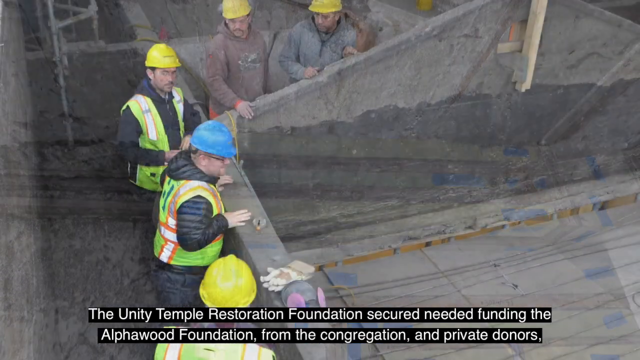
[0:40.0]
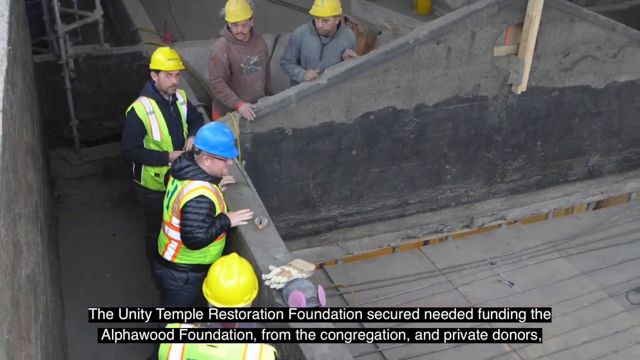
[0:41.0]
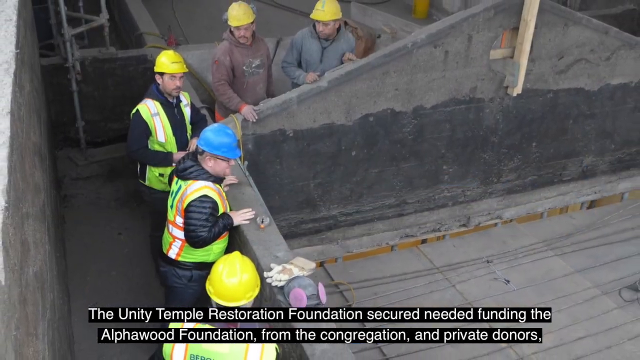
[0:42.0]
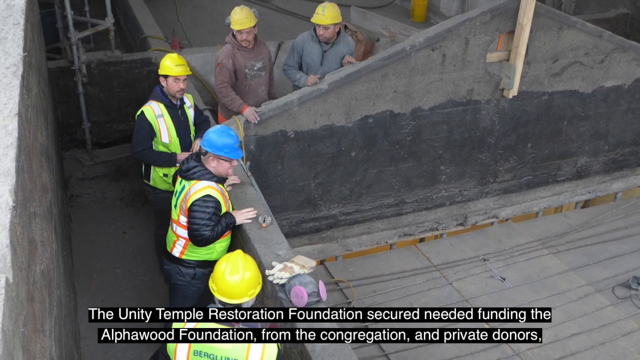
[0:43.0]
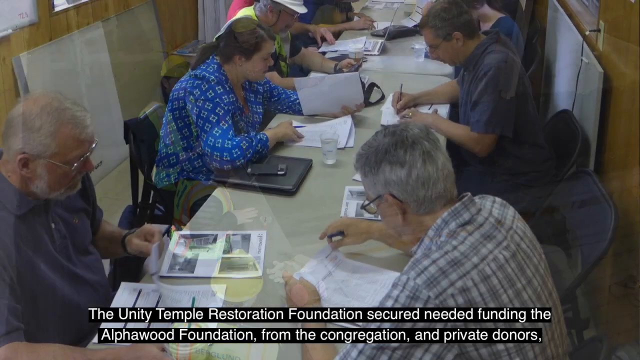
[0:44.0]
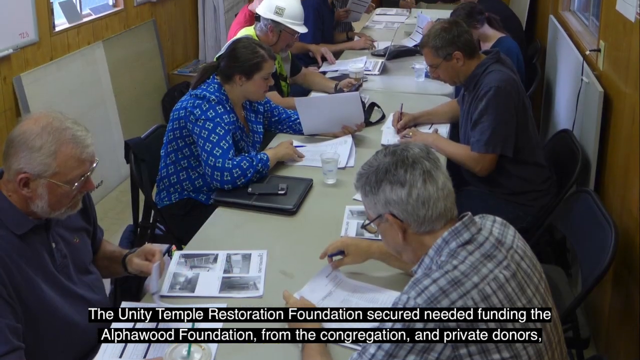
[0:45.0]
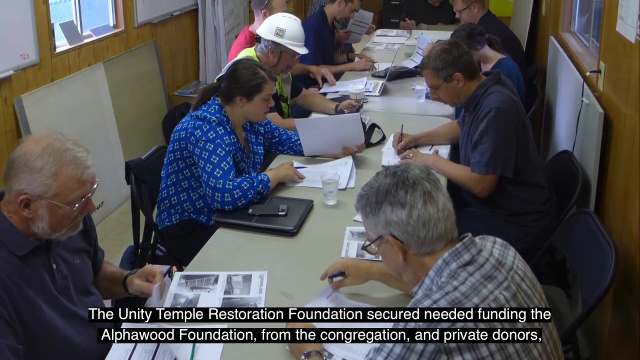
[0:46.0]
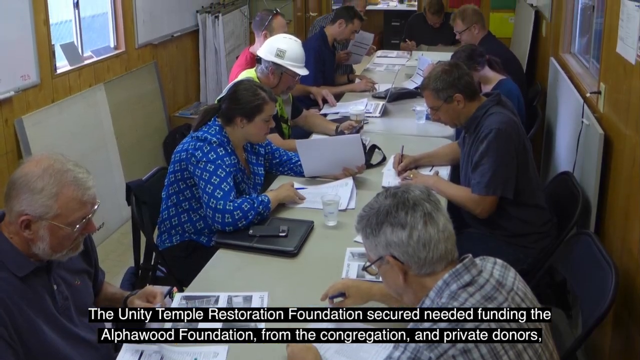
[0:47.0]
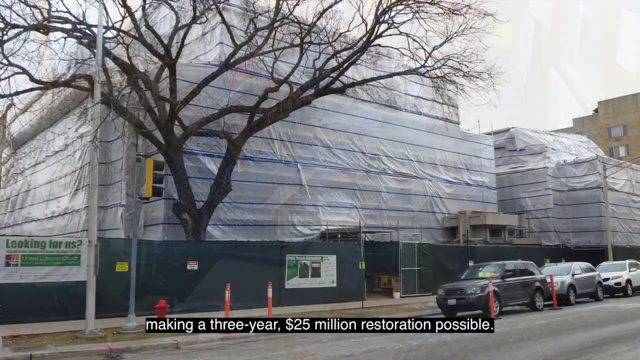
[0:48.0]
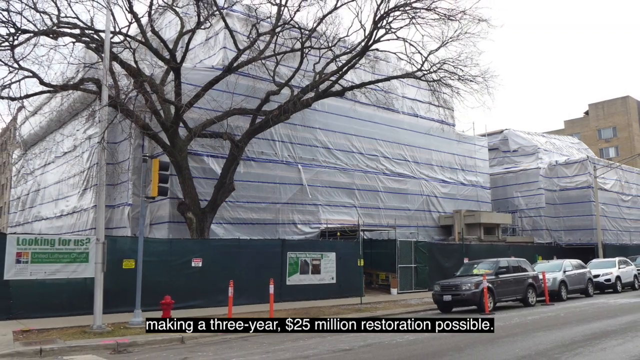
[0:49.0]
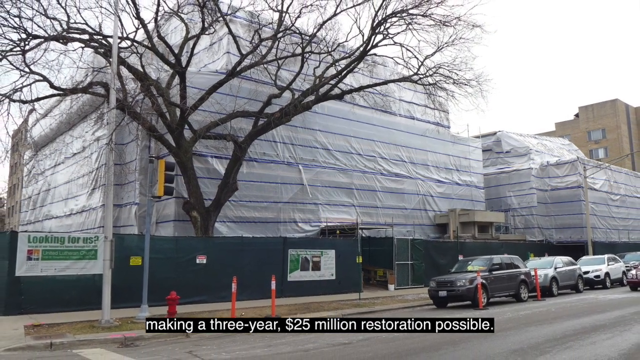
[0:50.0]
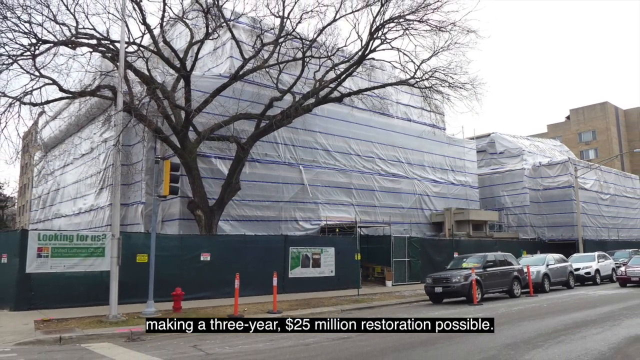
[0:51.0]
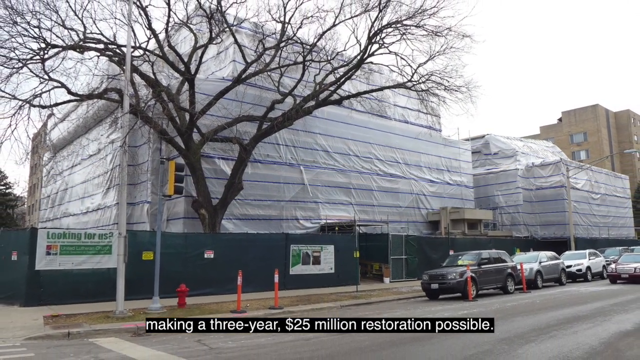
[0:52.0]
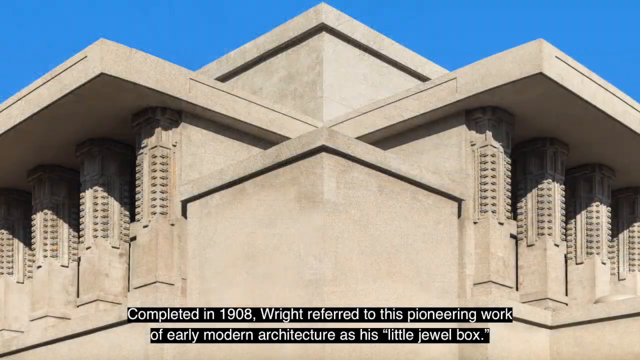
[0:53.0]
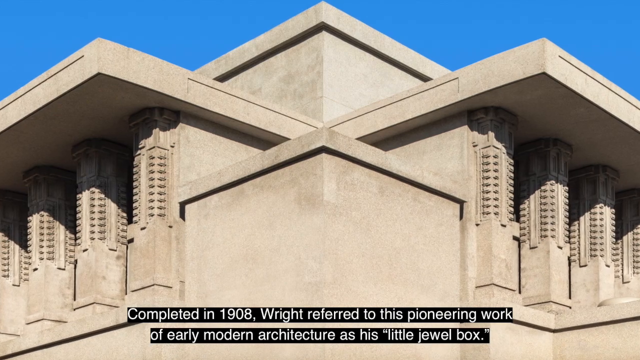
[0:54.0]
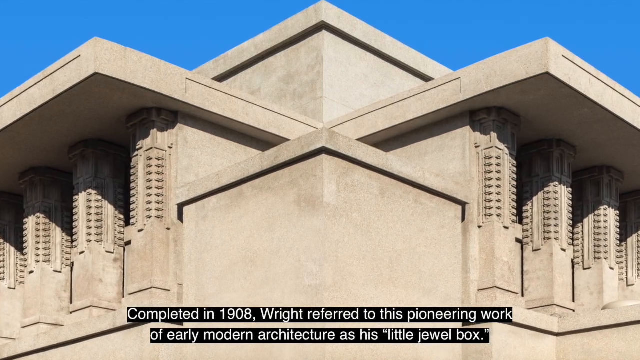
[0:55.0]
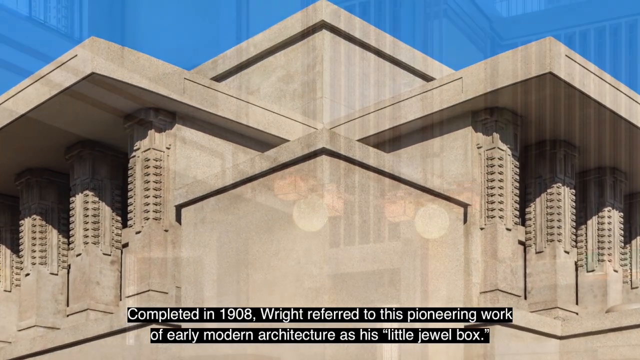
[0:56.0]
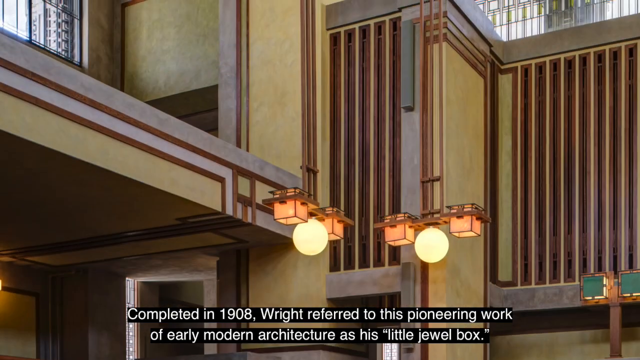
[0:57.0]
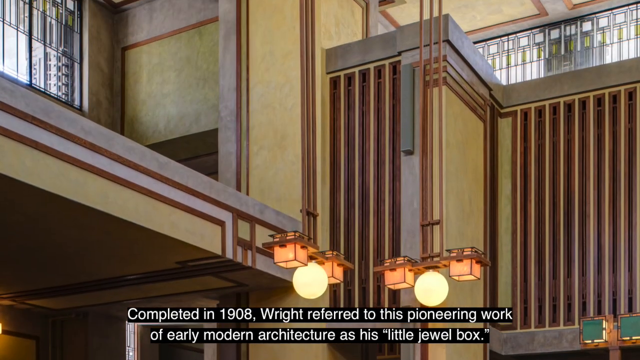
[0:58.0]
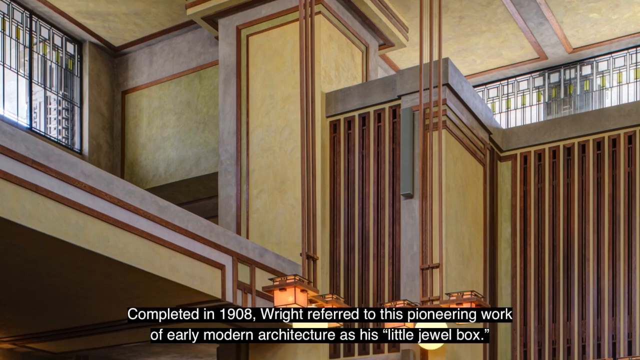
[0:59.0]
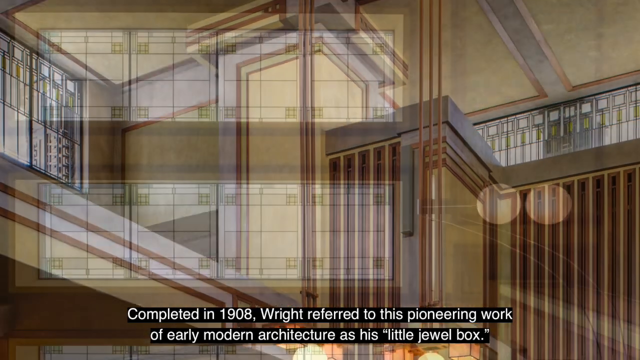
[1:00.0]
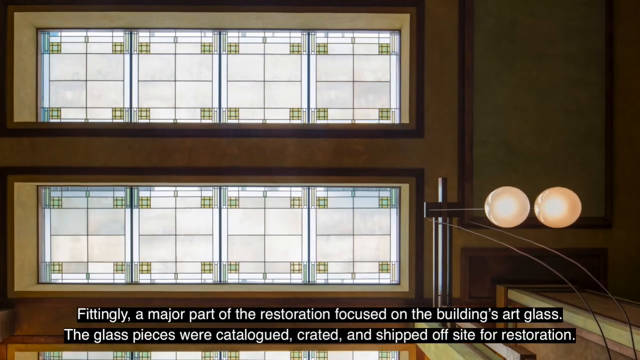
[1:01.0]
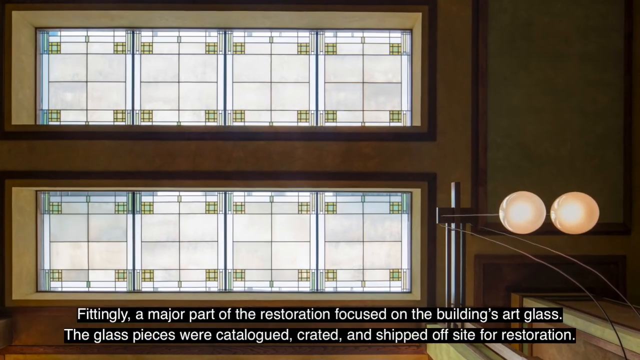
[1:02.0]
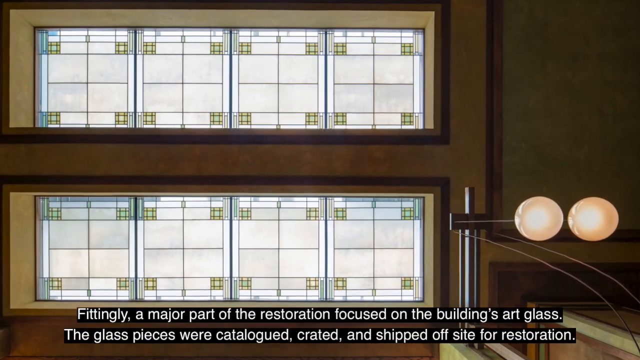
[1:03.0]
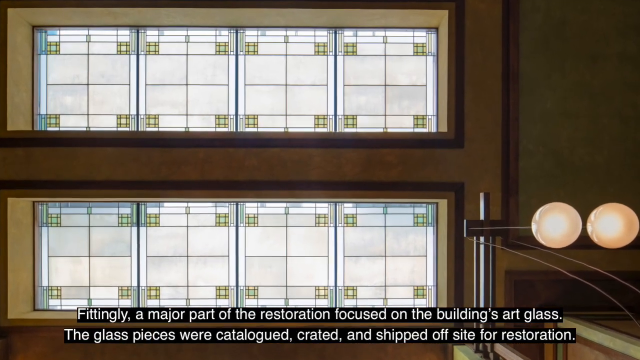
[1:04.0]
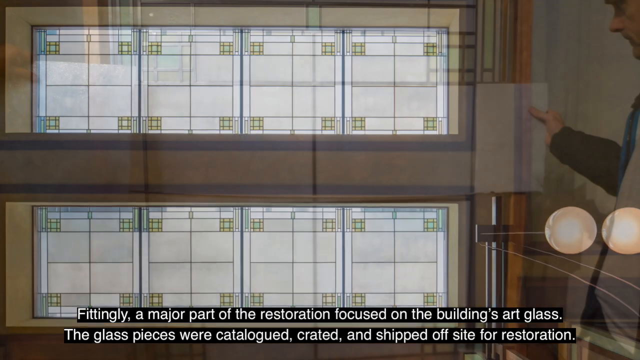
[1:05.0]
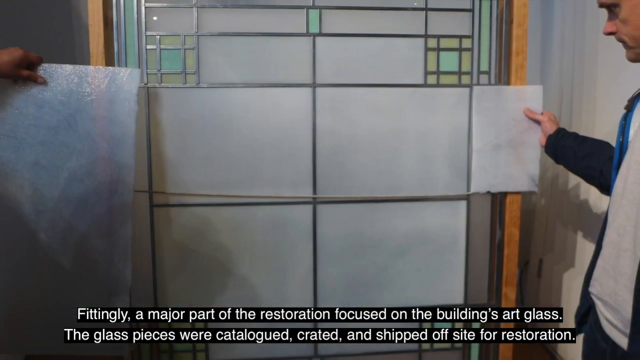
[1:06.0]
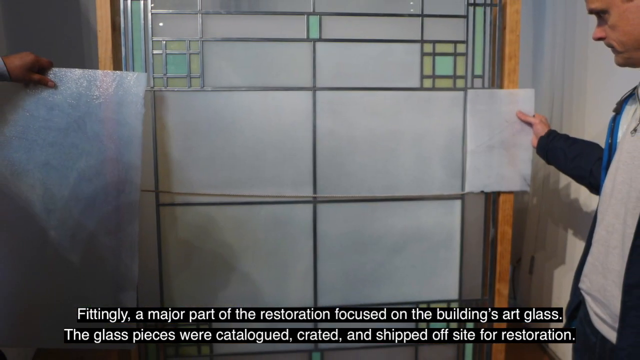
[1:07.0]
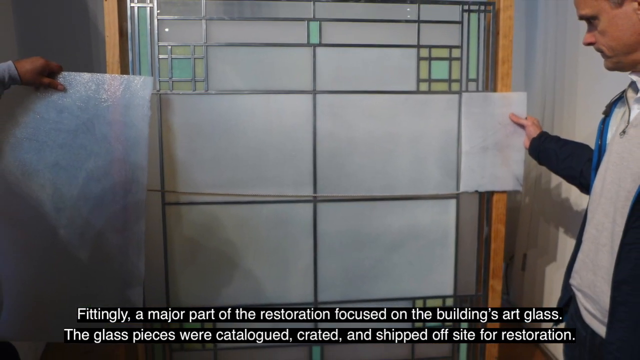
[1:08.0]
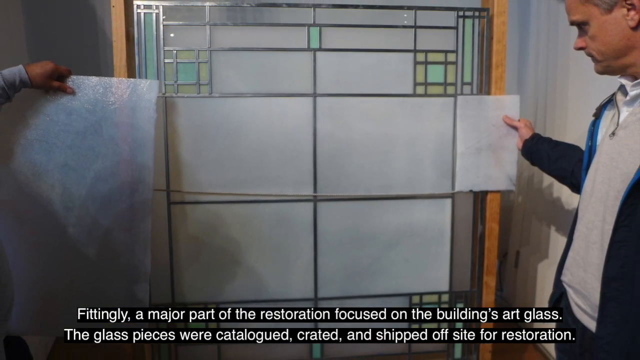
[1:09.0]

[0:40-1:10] An image shows men in hard hats looking over a building, followed by an image of people at a long table, planning. The building is then seen from the street outside, completely wrapped in plastic as it undergoes renovations. The camera pans out and then back into the corner of the building, showing the restored concrete with angular pieces and Frank Lloyd Wright columns in it. The last two shots are of the inside: pictures of the art glass windows, and pictures of the windows being disassembled and sent away to be restored. Throughout, the subtitles underneath read "The Unity Temple Restoration Foundation secured needed funding from the Alpha Wood Foundation, from the congregation, and from private donors, making a three-year, $25 million restoration possible. Completed in 1908, Wright referred to his pioneering work of early modern architecture as 'little jewel box.' Fittingly, a major part of the restoration focused on the building's art glass." A further subtitle says the pieces were catalogued and shipped off-site for restoration.